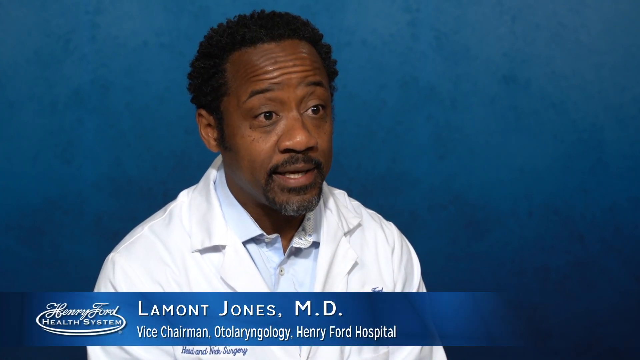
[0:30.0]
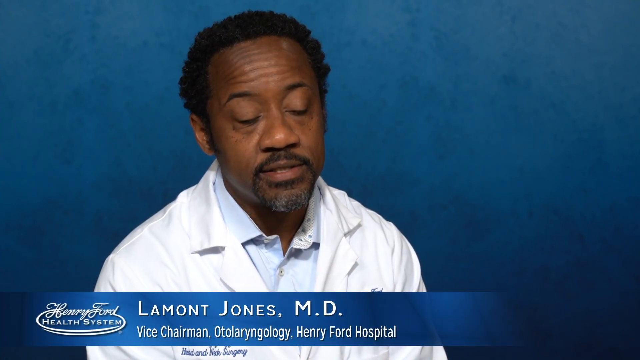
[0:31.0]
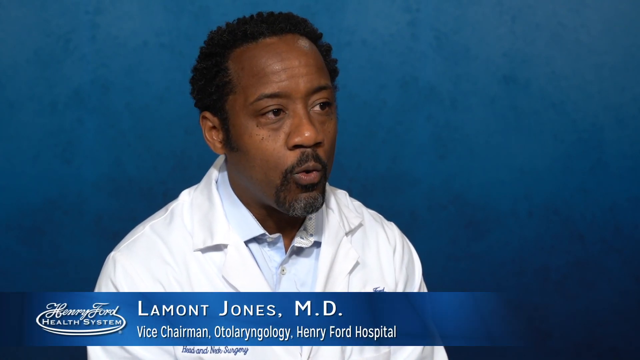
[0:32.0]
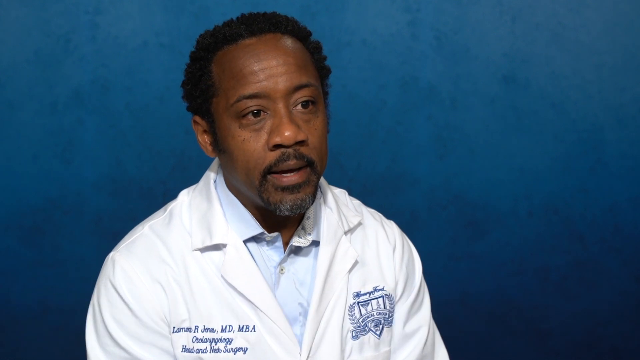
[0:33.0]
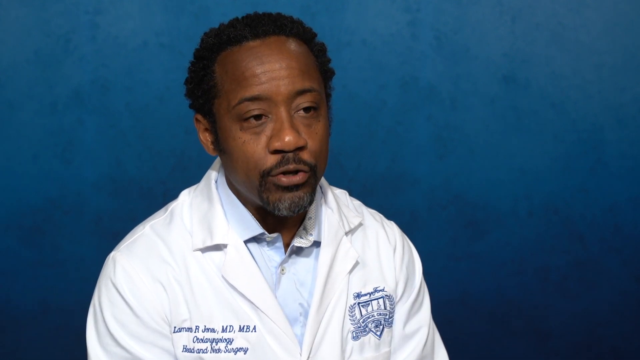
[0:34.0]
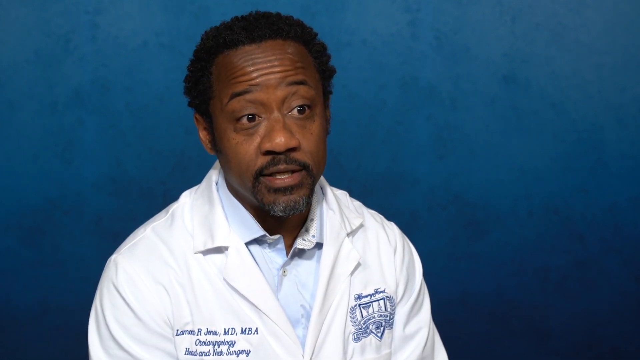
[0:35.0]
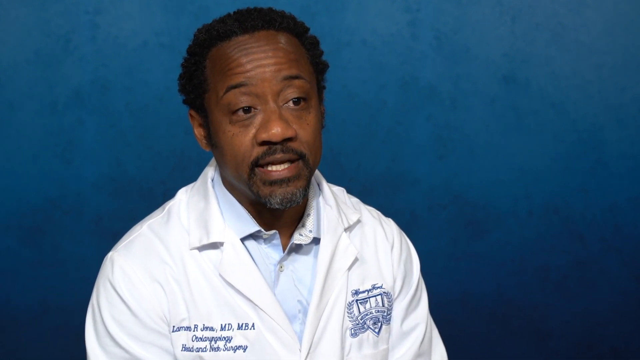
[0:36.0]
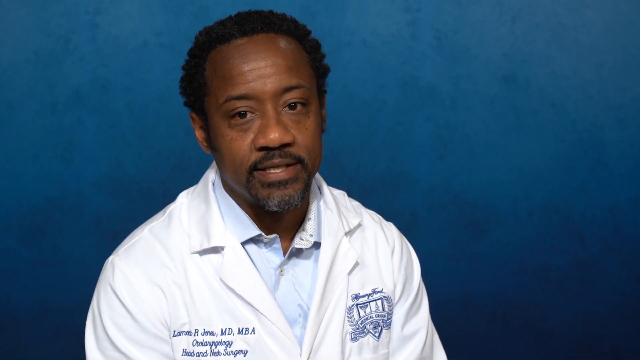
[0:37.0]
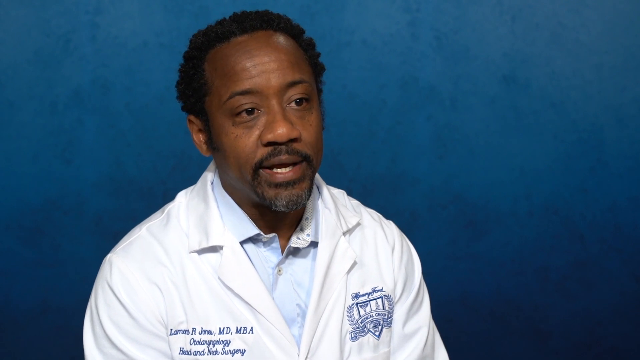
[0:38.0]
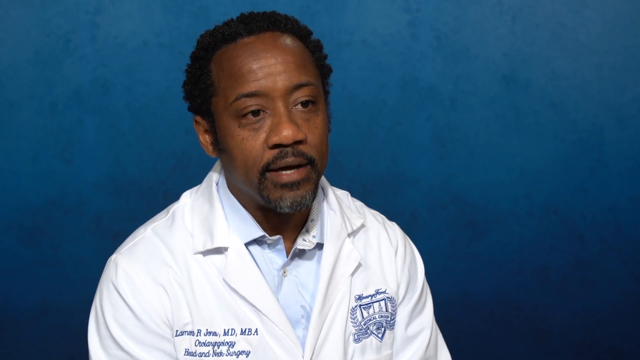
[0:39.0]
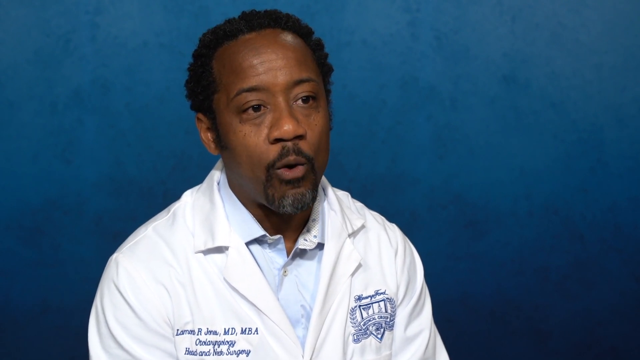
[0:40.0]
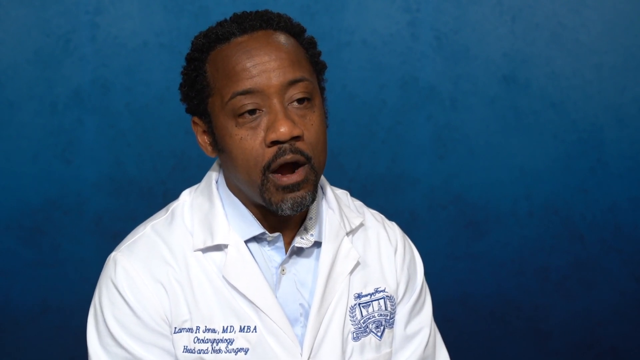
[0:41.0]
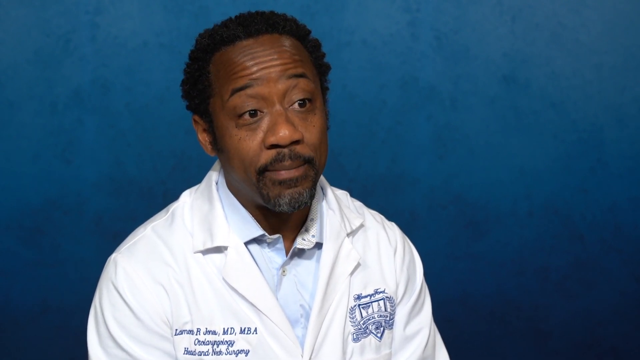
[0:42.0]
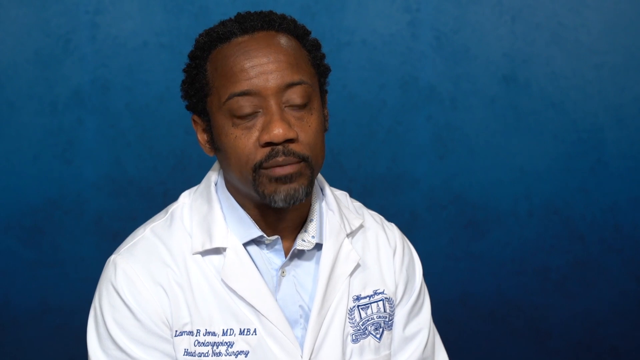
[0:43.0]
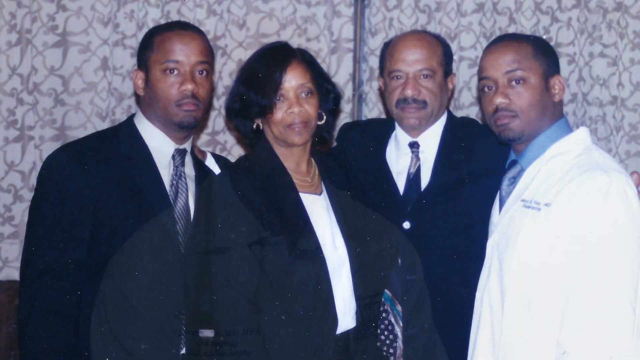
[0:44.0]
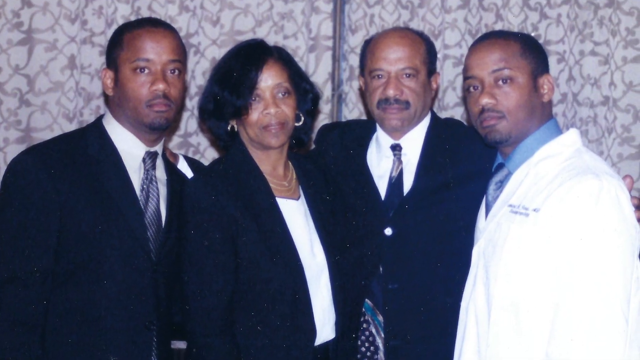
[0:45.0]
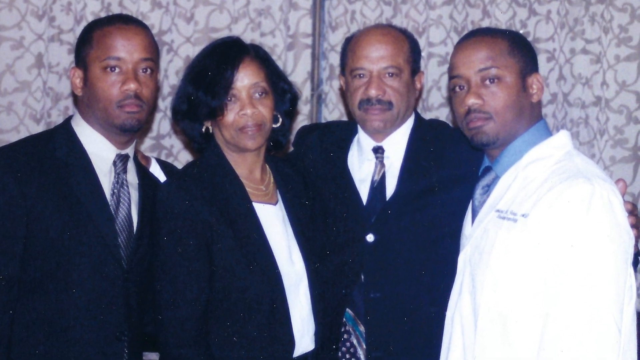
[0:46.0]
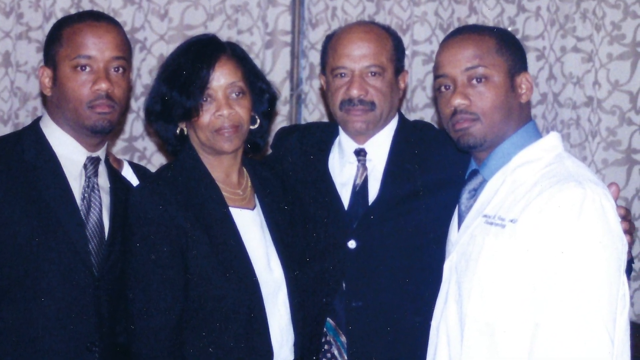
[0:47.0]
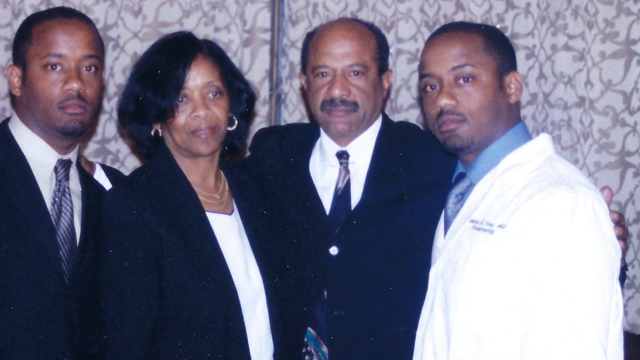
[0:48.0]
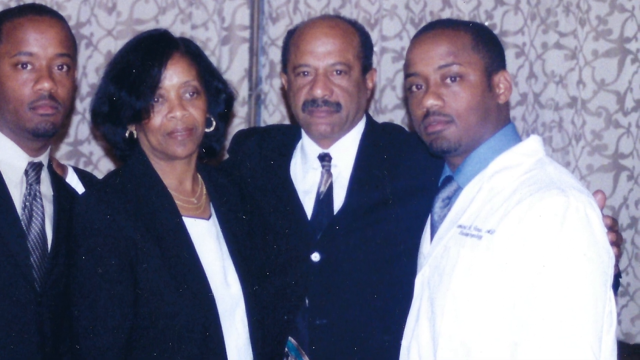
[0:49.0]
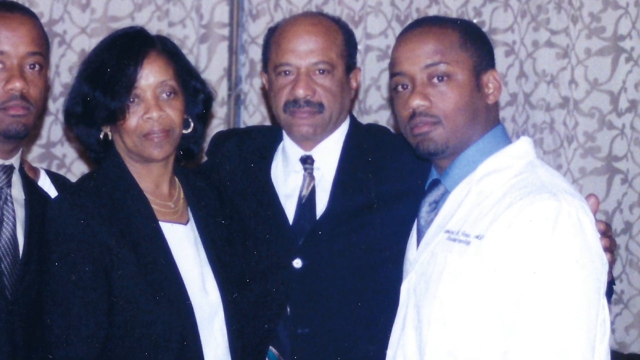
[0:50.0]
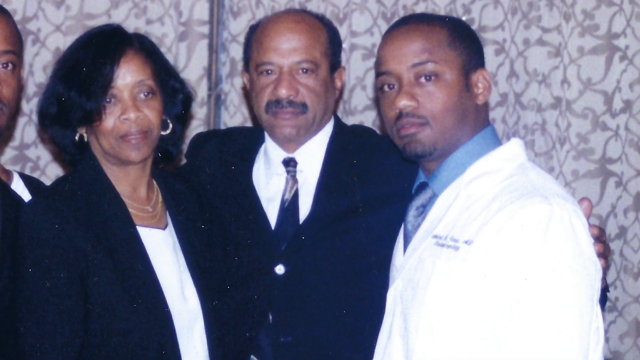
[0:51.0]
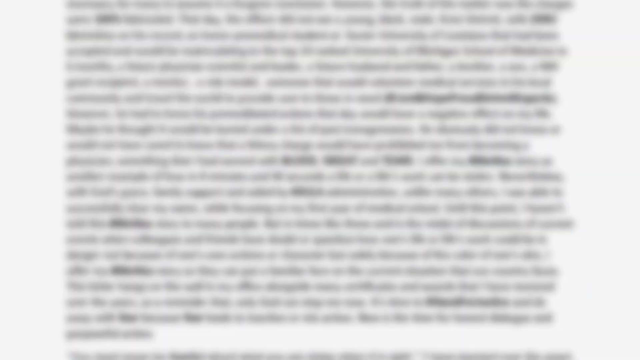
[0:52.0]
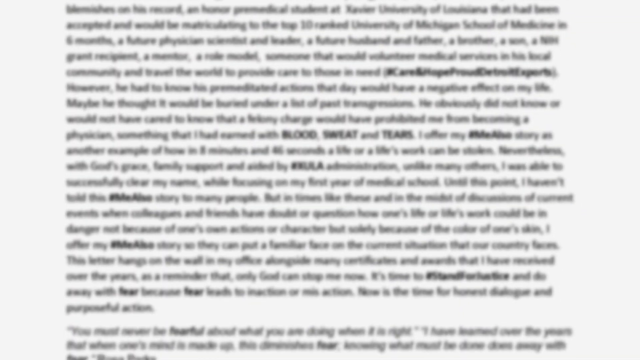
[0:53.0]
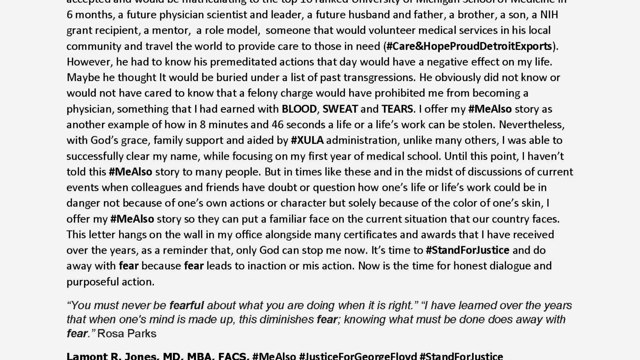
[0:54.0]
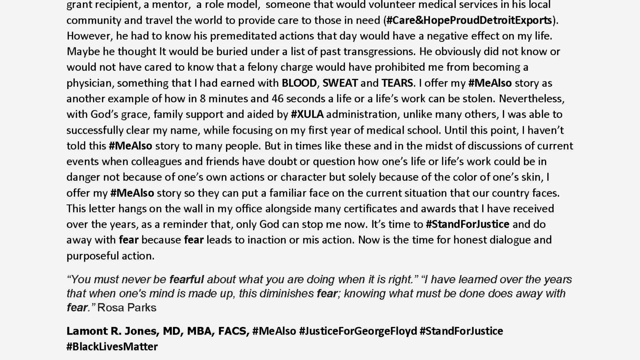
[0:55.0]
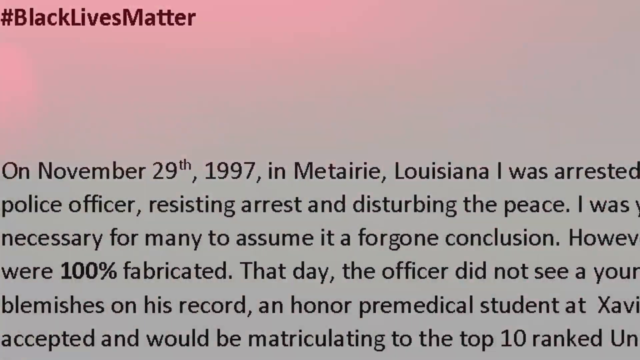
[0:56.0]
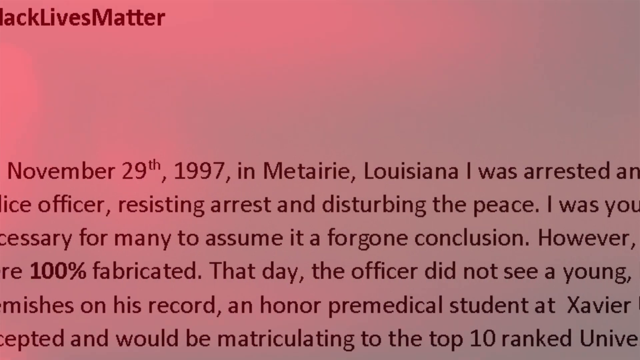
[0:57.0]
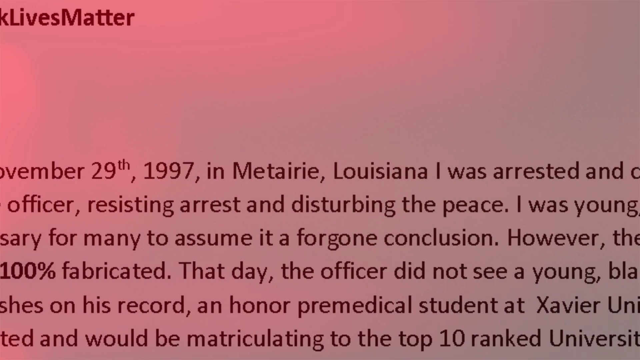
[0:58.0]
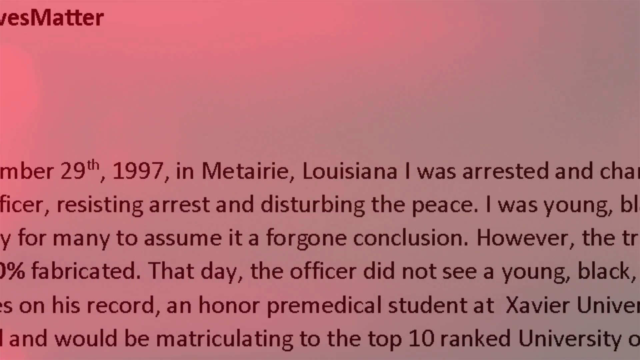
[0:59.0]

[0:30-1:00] A close-up shows a man sitting in a room with a blue backdrop. A text box at the bottom of the screen identifies him as "Lamont Jones, M.D., Vice Chairman Otolaryngology, Henry Ford Hospital," and next to his name is a logo that reads "Henry Ford Health System." He speaks while looking slightly off to the right of the screen, and he is slightly animated as he talks, his eyebrows moving quite a bit. The video then switches to a photograph of two young Black men and two older Black people, a man and a woman, standing in a row and all looking at the camera. The camera pans over to the young man on the right, who wears a doctor's white coat. The other two men are in suits and ties, and the woman is dressed in a black jacket, a white blouse, and some earrings and necklaces. Next comes a page of text that looks like it is from a book or an article, and the camera pans down over it. A close-up of another bit of text reports that someone was arrested, and red and blue lights flash on the screen.